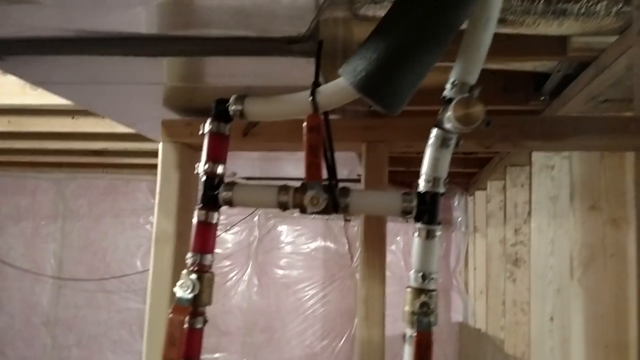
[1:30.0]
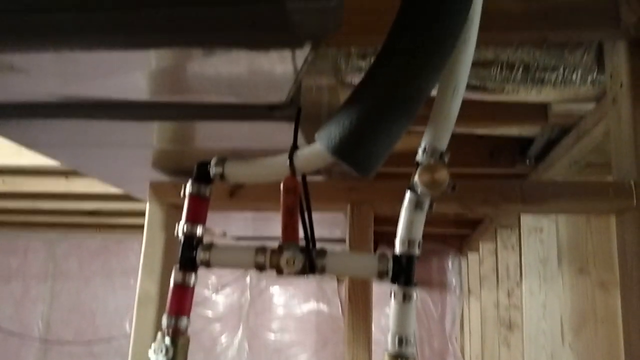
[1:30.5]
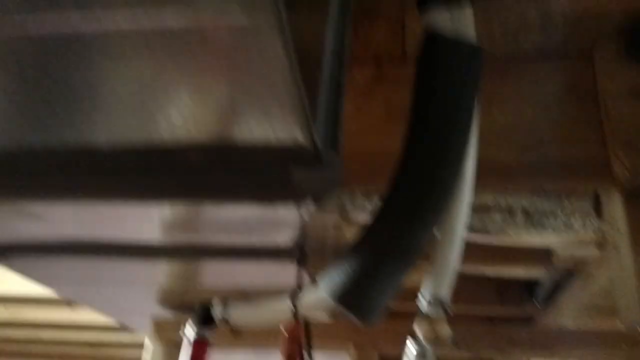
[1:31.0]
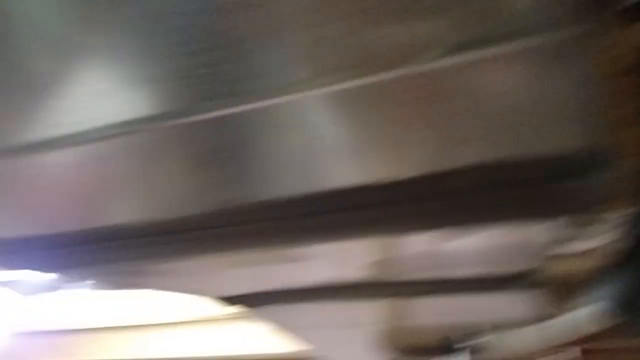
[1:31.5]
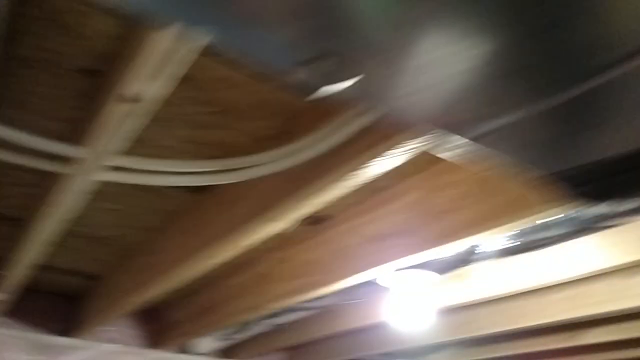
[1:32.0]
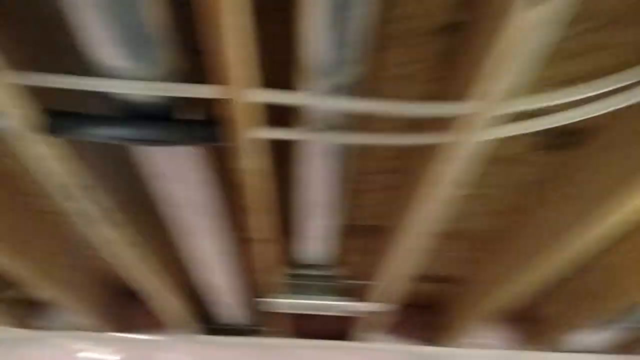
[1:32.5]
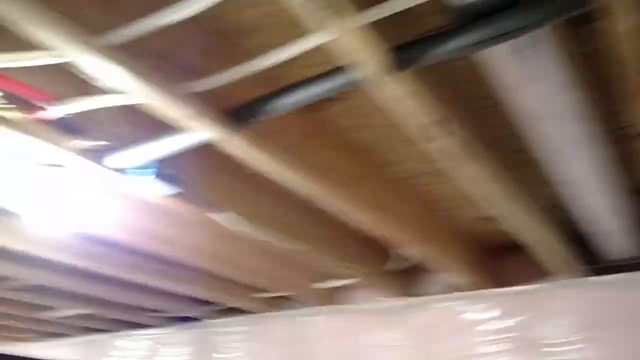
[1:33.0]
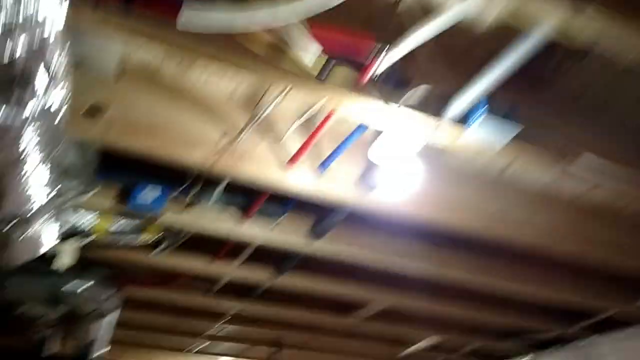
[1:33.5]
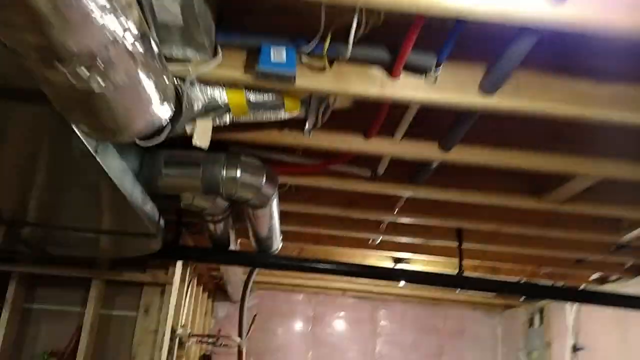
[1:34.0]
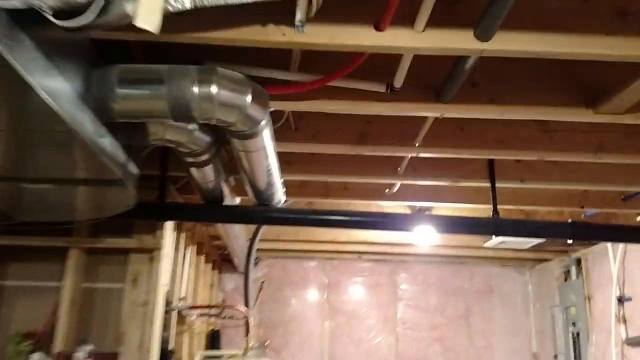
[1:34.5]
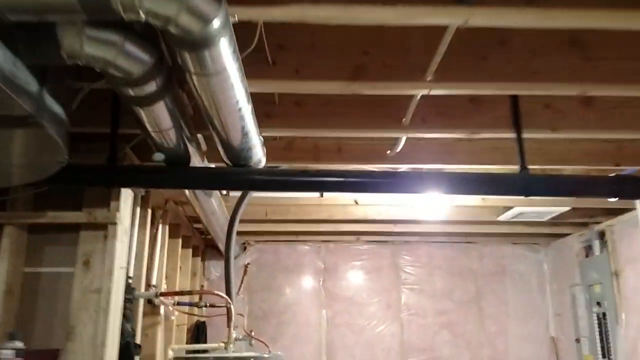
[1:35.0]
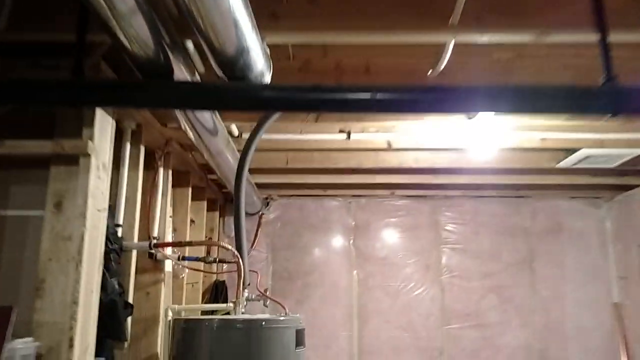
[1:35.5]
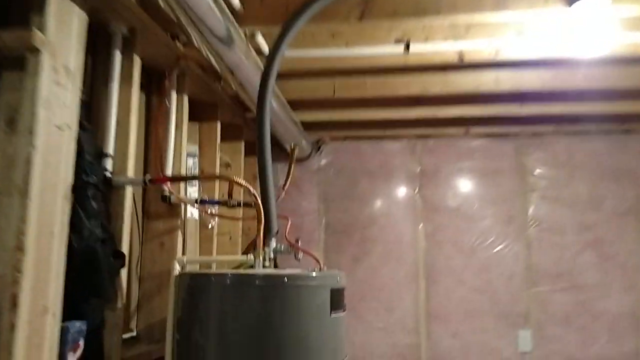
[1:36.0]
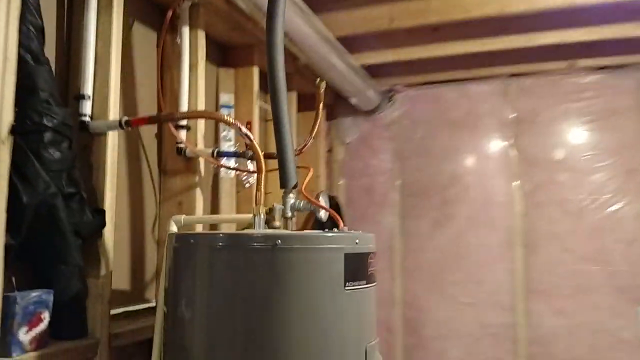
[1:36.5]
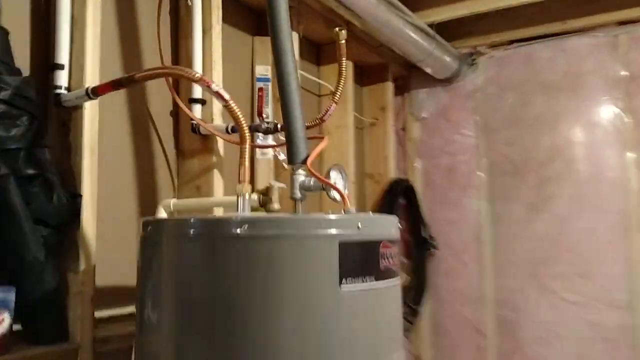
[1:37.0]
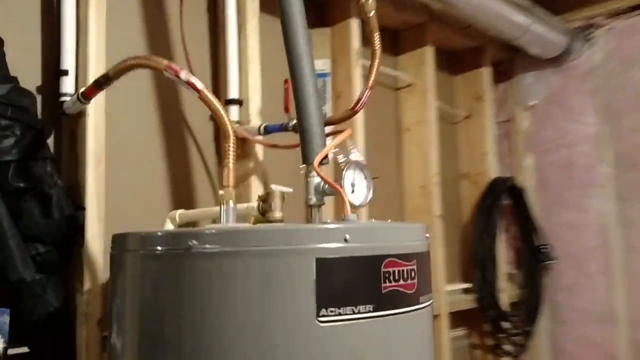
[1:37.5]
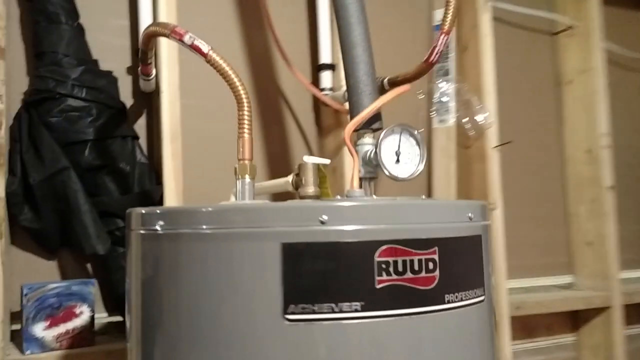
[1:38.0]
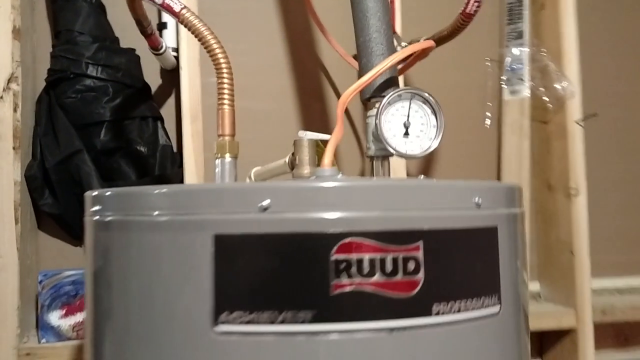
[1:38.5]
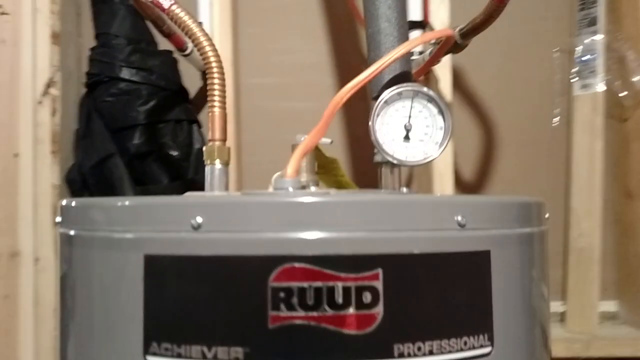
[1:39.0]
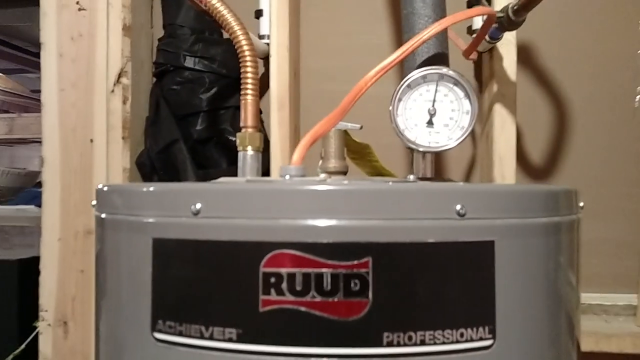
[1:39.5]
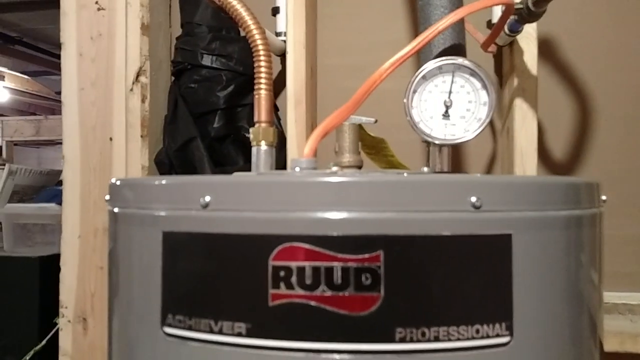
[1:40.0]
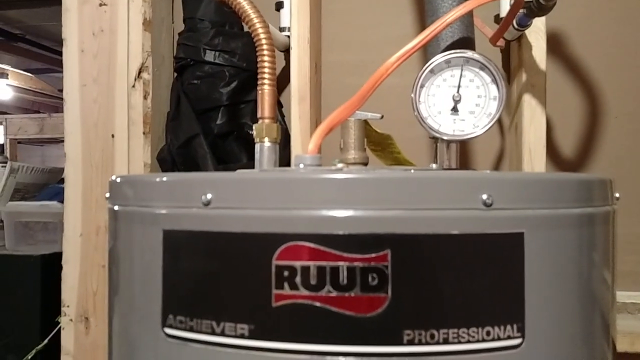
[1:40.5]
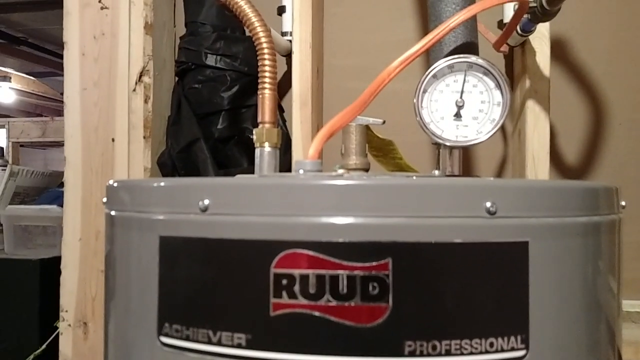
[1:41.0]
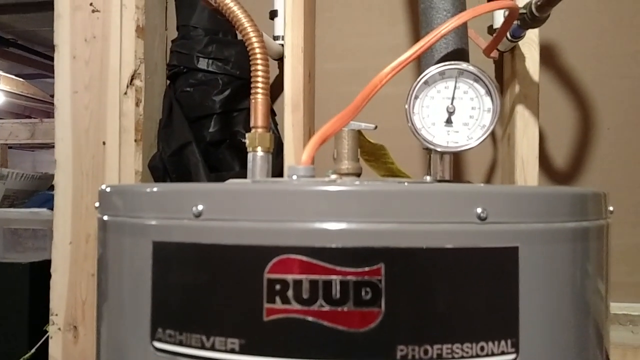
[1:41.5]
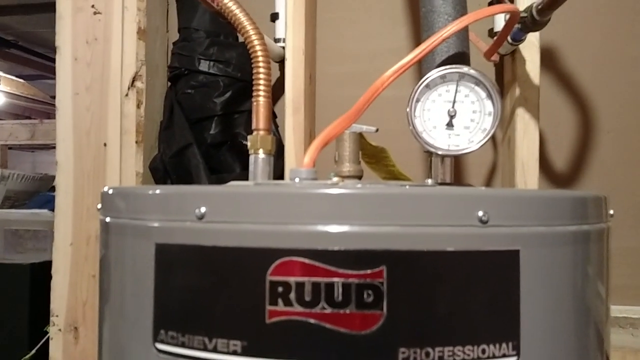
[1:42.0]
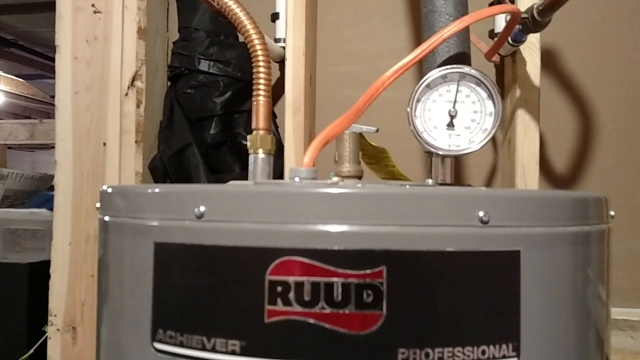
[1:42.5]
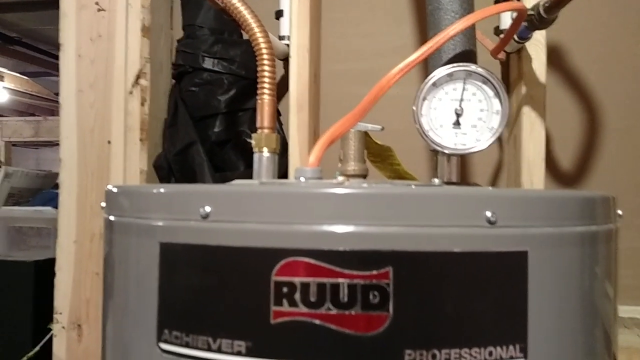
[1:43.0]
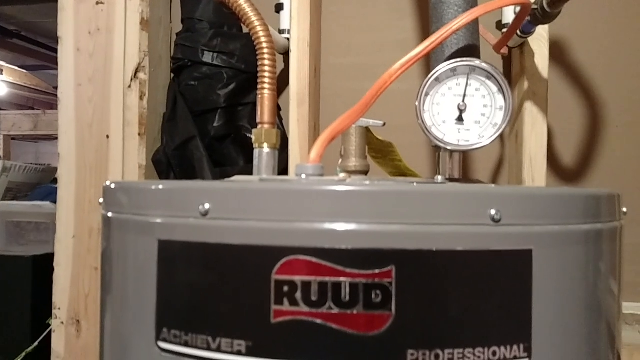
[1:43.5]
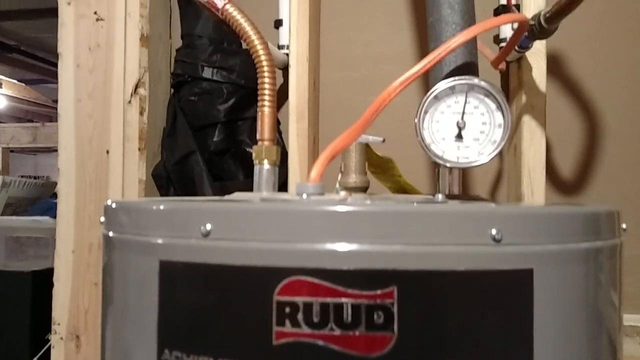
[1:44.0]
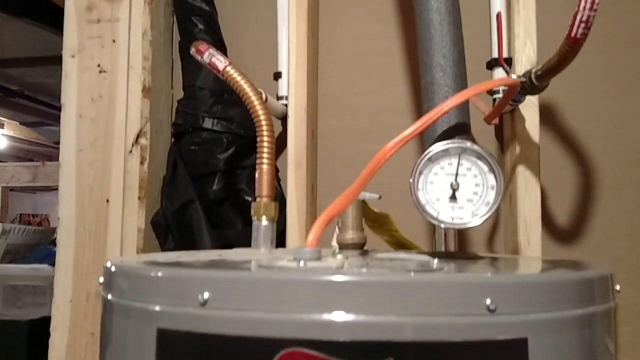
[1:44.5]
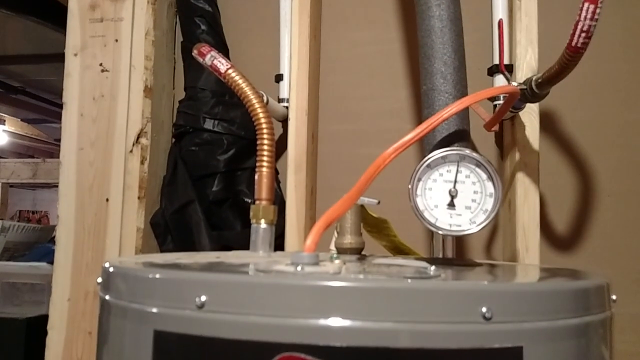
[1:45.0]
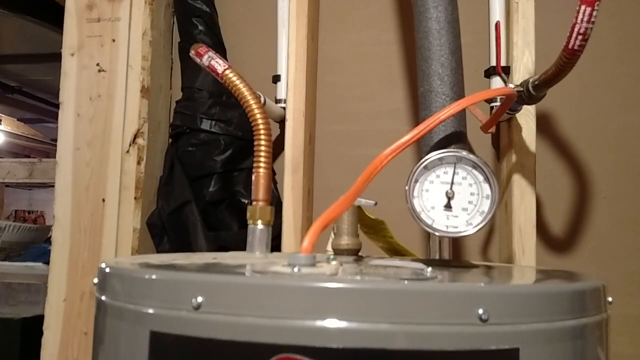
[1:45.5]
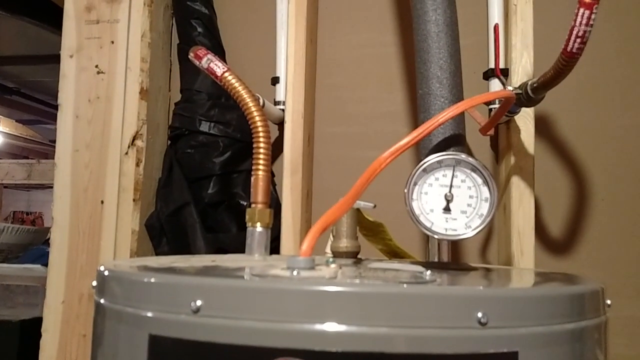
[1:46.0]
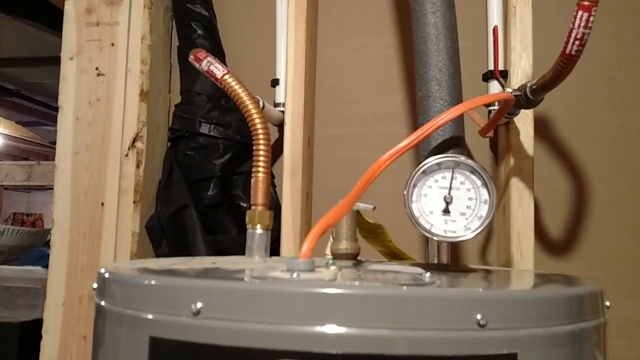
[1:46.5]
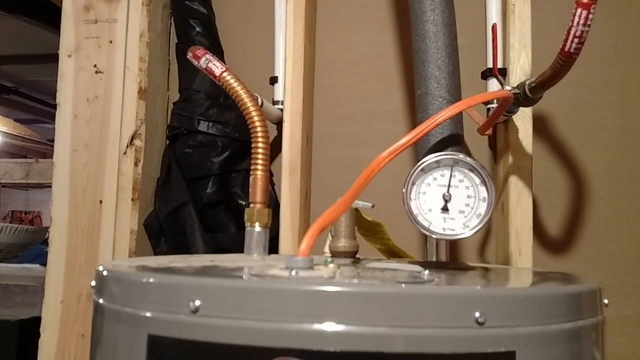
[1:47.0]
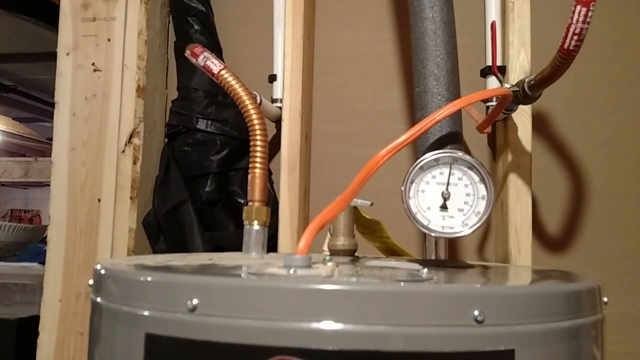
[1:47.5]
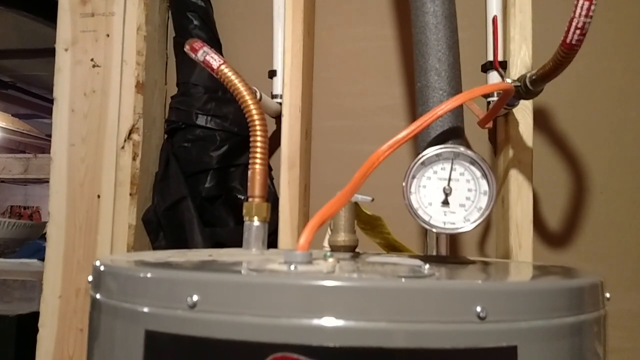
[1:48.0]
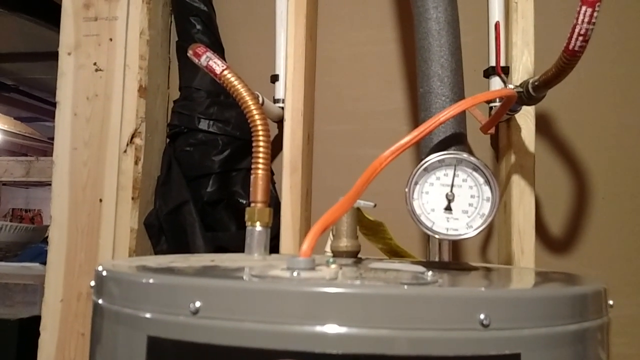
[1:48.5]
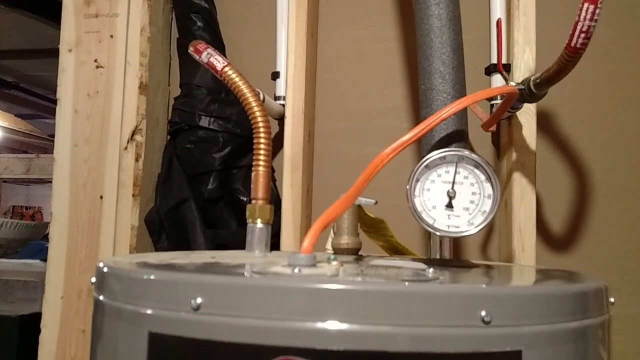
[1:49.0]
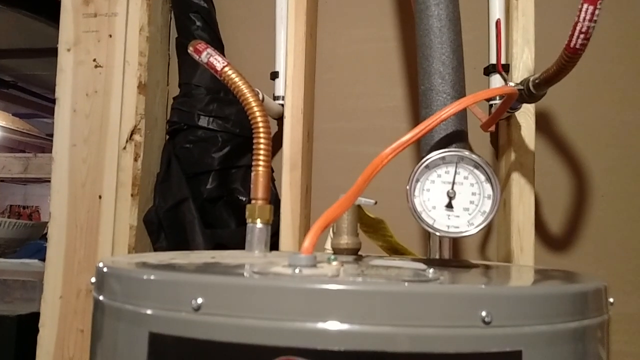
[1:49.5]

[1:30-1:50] A very old-model fireplace, black in colour, has a well-lit fire. The camera is shaky and unstable. It moves to the back of the fireplace, showing the pipes supplying energy to it, and follows where the pipes lead: upwards to the roof, where the tank is. The tank is medium-sized with steel pipes connected to it, which supply the energy to the fireplace. The room is well lit, not clean, and looks like a warehouse. The camera moves behind the fireplace to where the energy tank is.